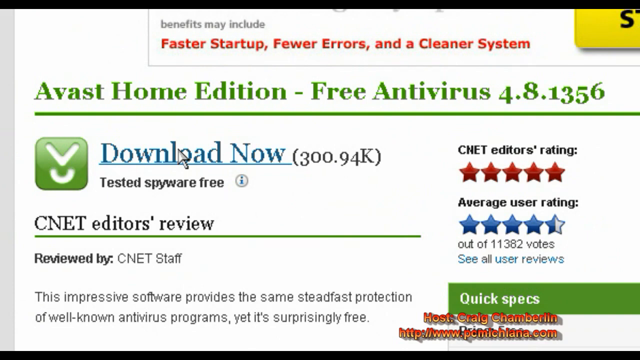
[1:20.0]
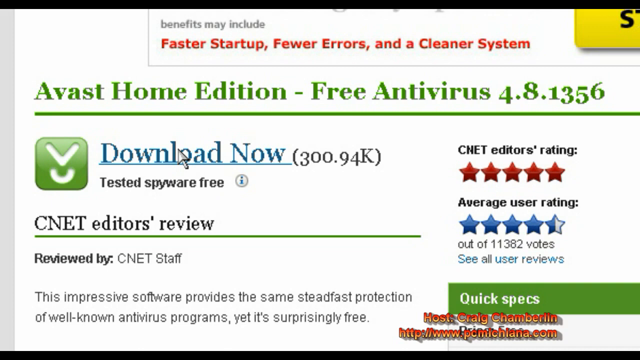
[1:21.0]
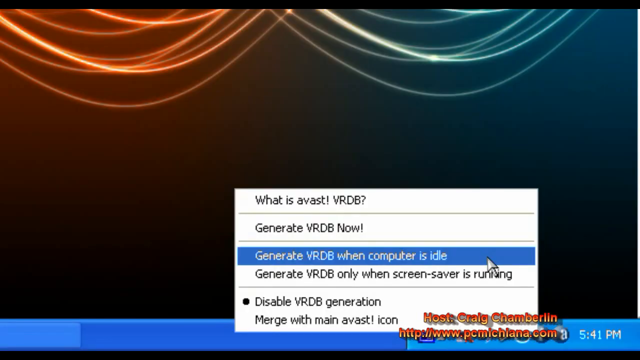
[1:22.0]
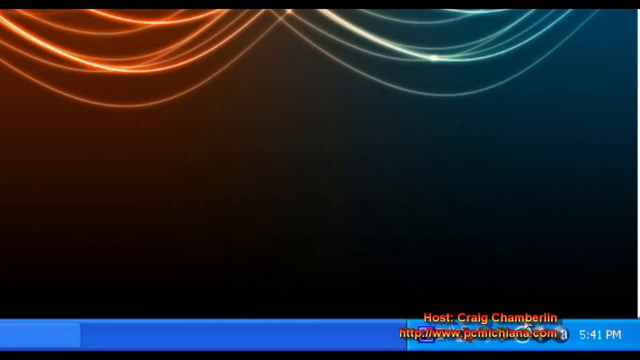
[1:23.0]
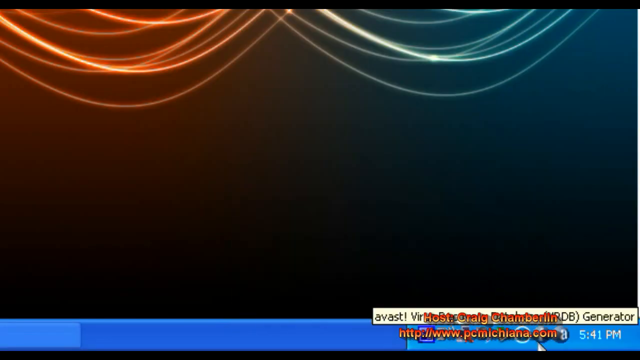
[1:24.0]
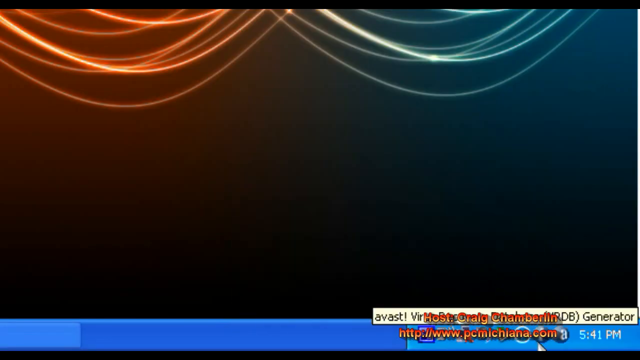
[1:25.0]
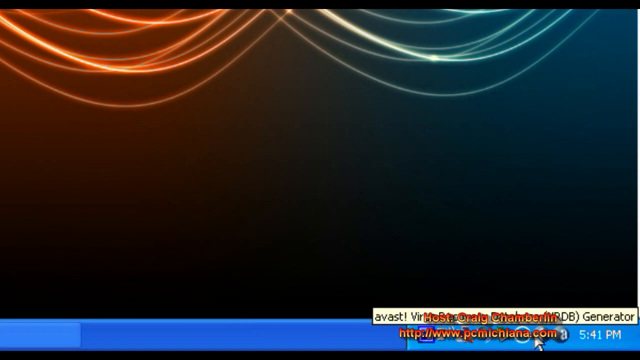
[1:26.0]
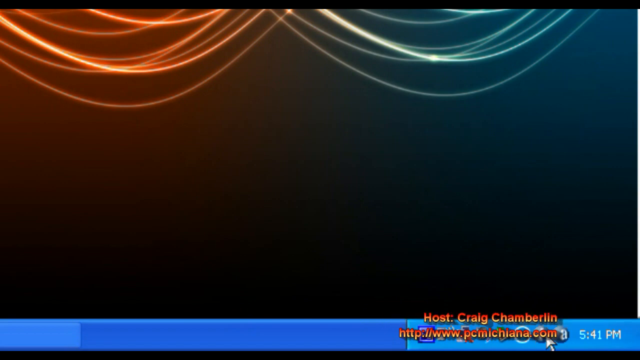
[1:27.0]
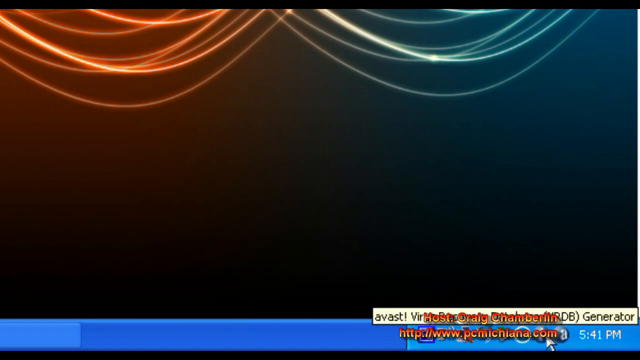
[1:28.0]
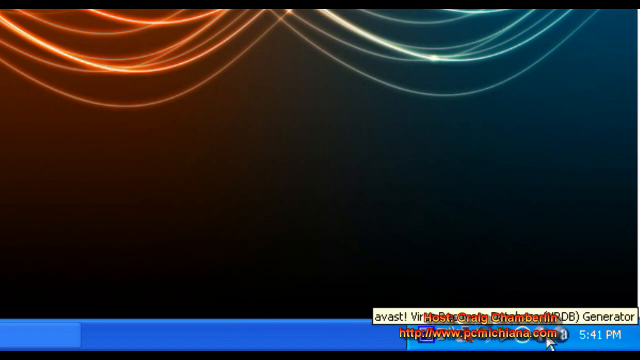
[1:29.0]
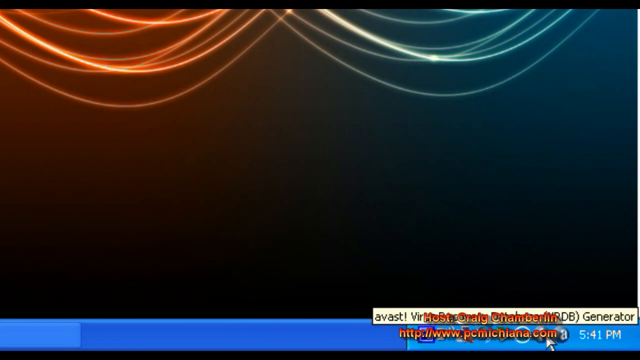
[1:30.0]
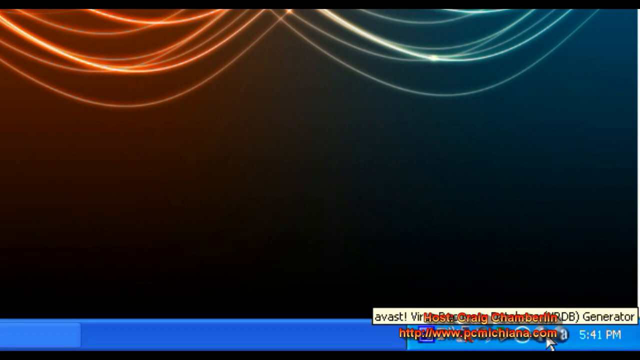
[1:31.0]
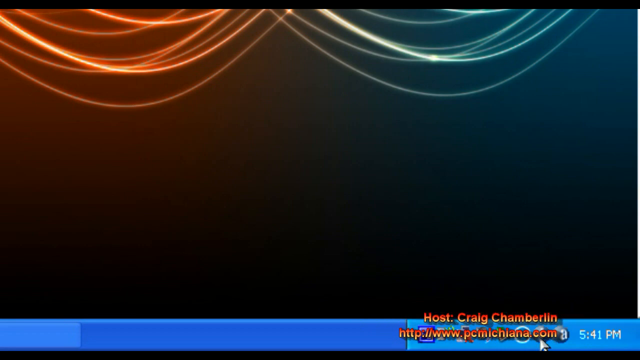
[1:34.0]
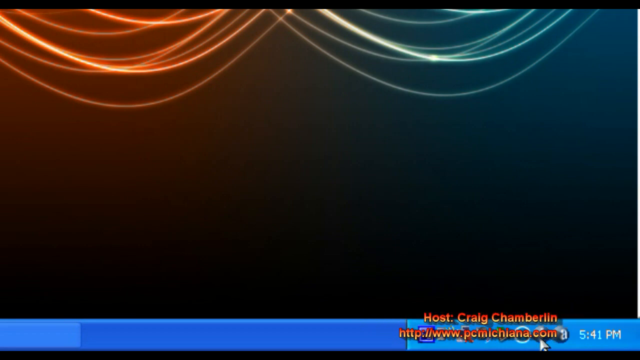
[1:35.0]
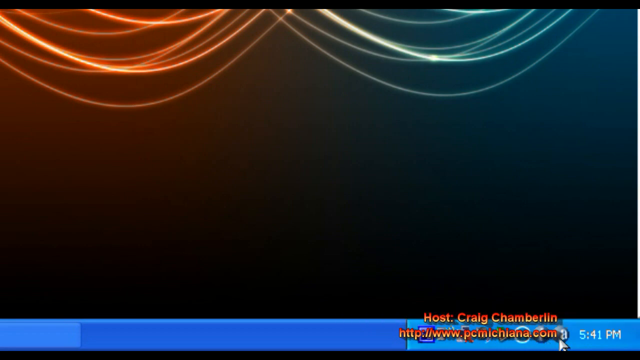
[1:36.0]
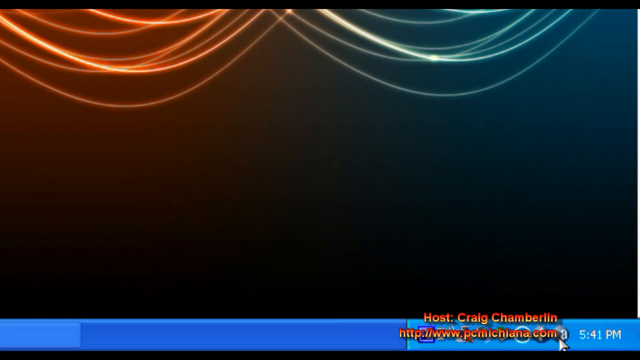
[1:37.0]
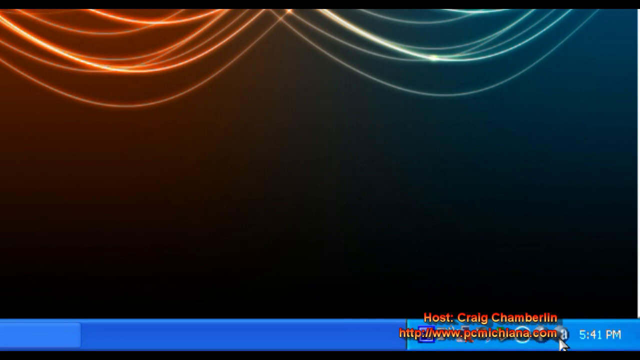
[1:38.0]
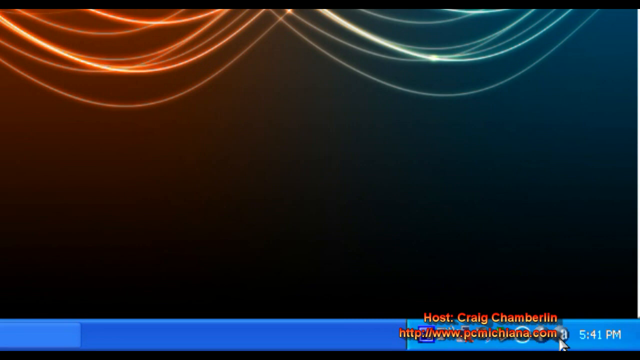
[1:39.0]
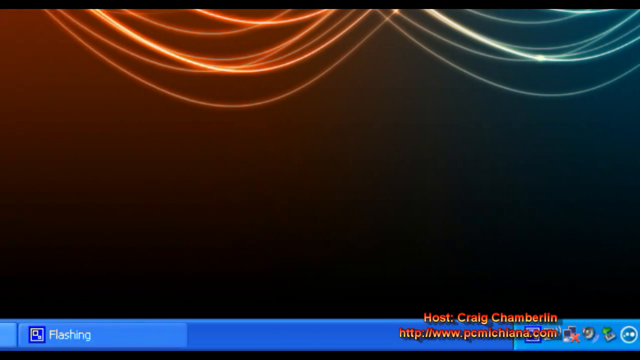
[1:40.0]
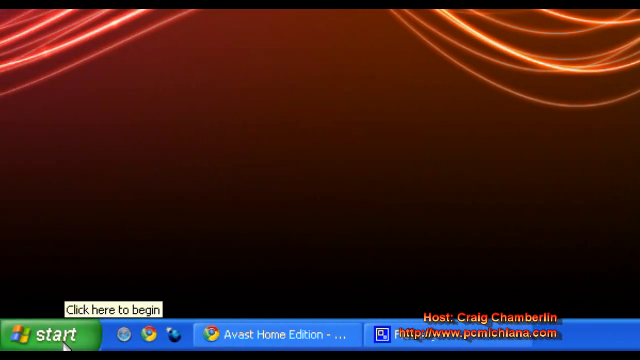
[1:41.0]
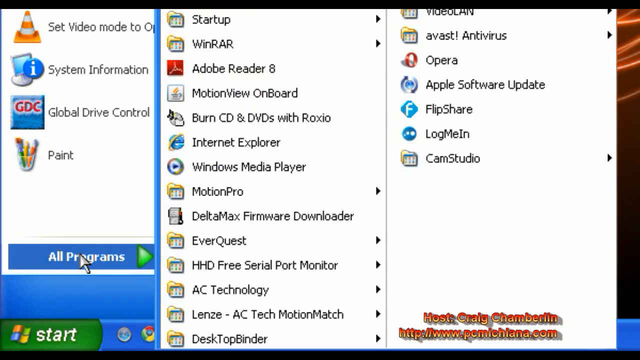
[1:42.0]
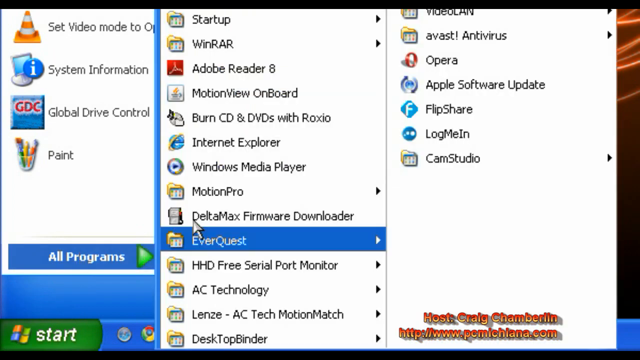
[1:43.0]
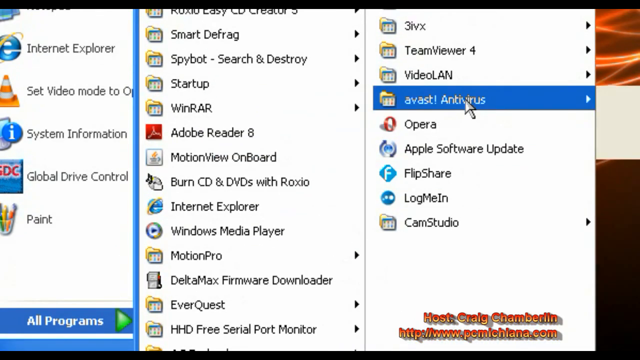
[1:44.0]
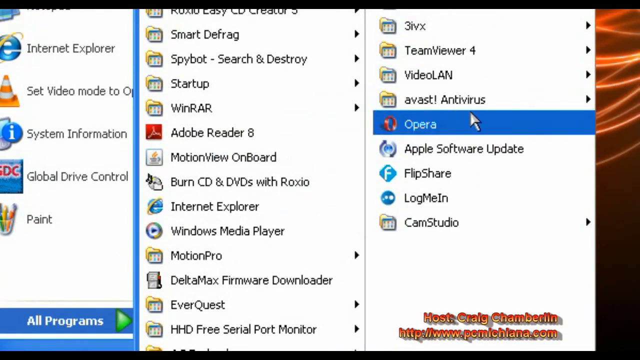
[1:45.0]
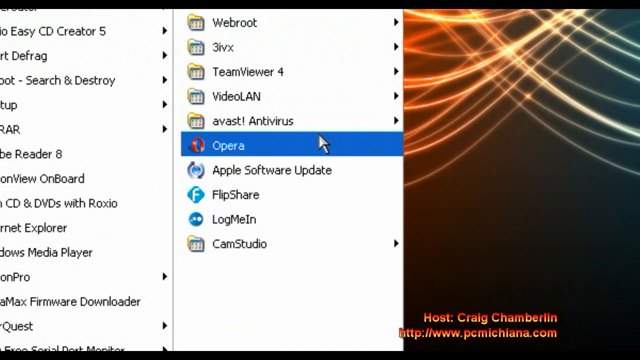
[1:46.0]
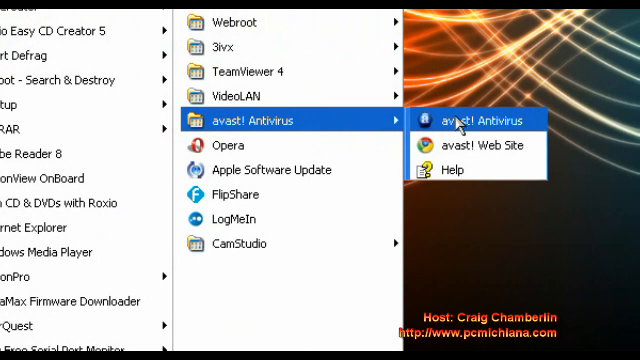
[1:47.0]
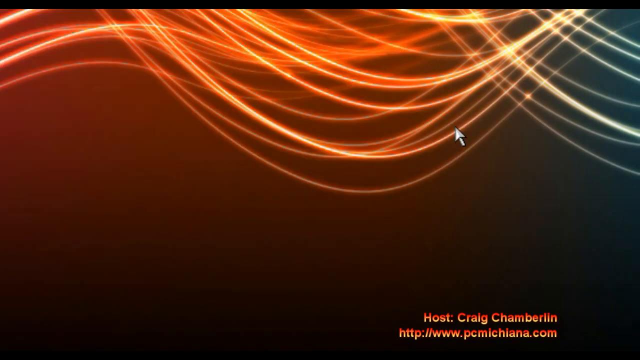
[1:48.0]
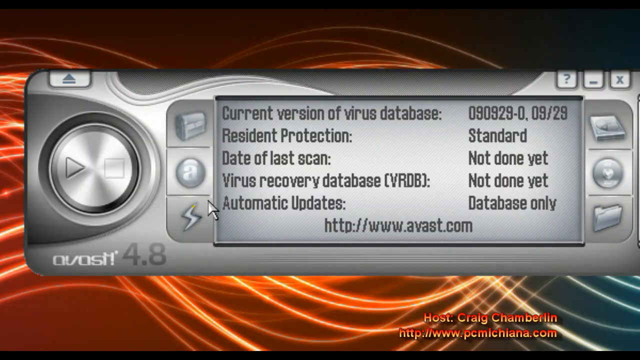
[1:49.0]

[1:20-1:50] The view leaves the download page and the web page altogether, moving down to the toolbar at the bottom of the computer. The cursor highlights various buttons, but they are hard to make out because a watermark about the host, Craig Chamberlain, and the website is over them. The system looks like an old model of Windows with the old-fashioned bright blue. Various menu options are opened, and something appears to be opening, though it is covered by the writing. The cursor moves across to the start button, into all programs, then to Avast antivirus, and clicks to open it. The program looks a little like a stereo setup, grey, like a picture of a stereo screen. It has a play button and shows information about its current version, resident protection, when it last scanned, and its database. The cursor hovers over a lightning button for updating the virus database. The version is Avast 4.8, and it really looks like some kind of player.